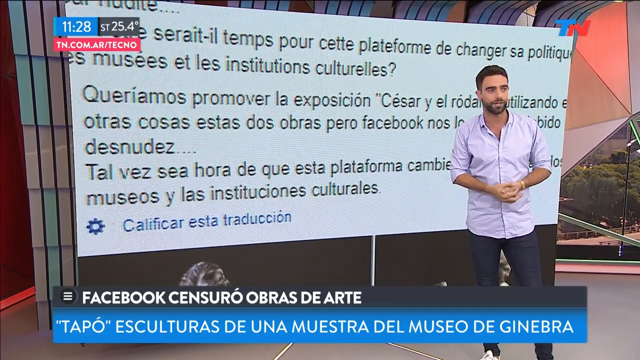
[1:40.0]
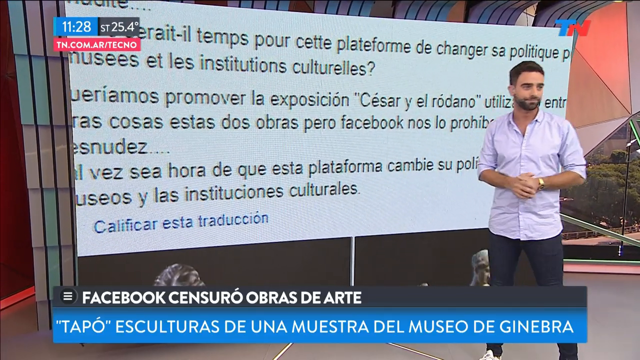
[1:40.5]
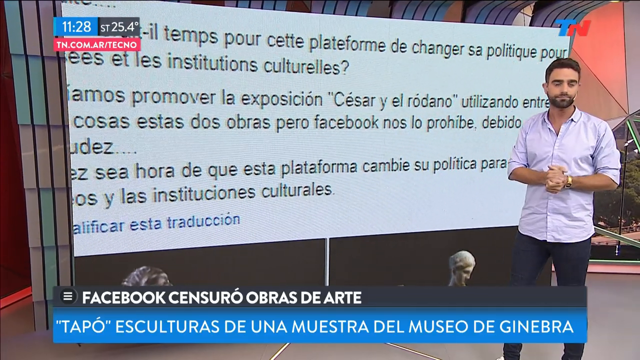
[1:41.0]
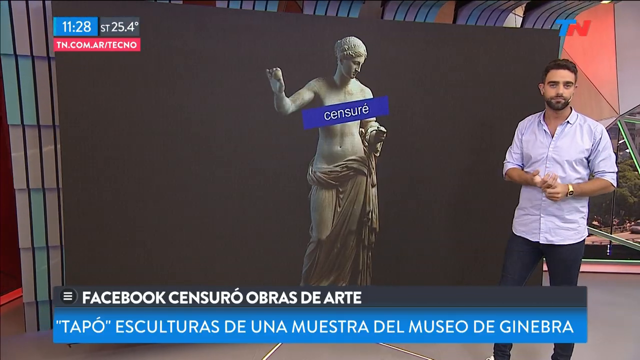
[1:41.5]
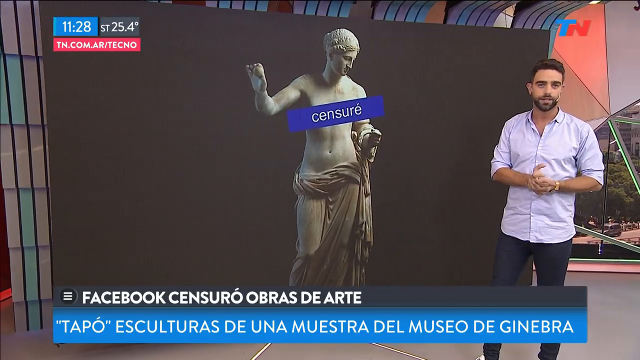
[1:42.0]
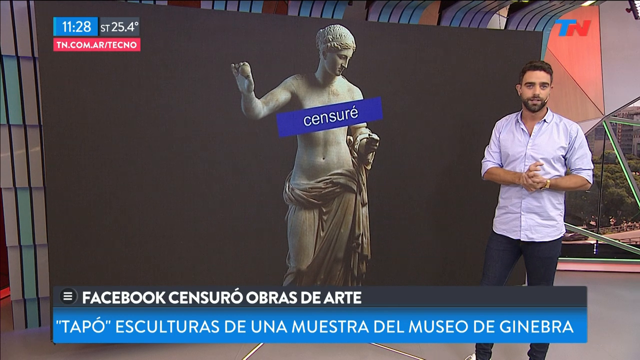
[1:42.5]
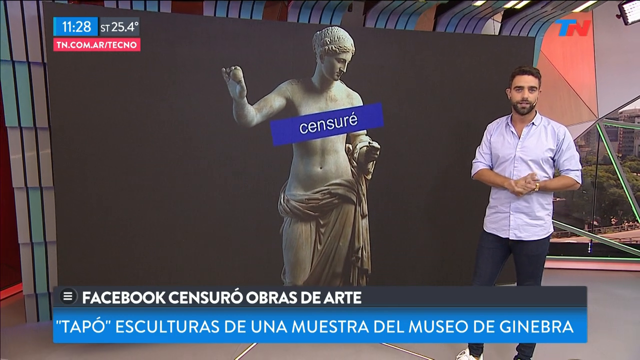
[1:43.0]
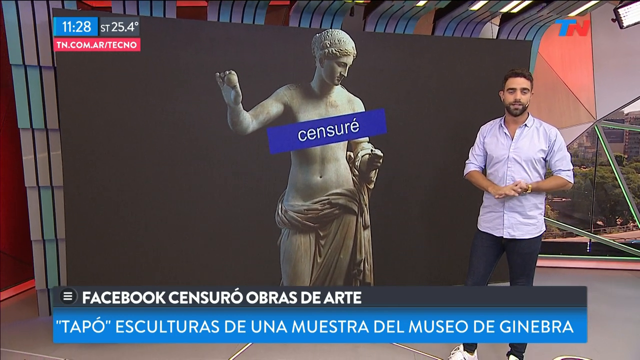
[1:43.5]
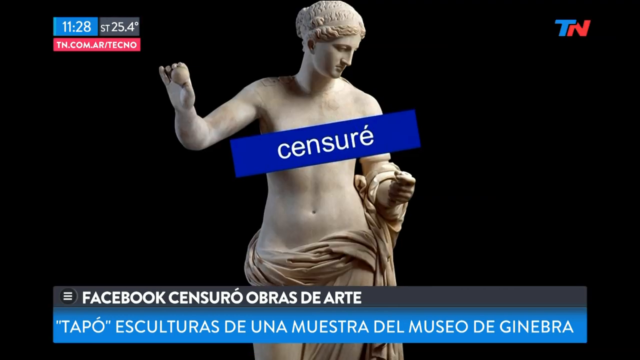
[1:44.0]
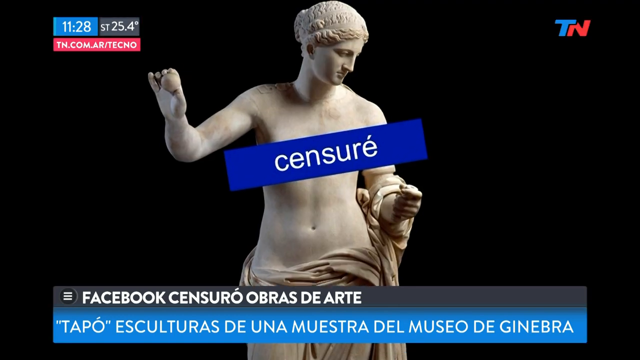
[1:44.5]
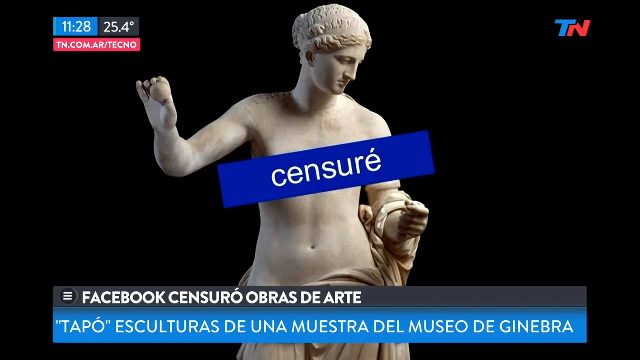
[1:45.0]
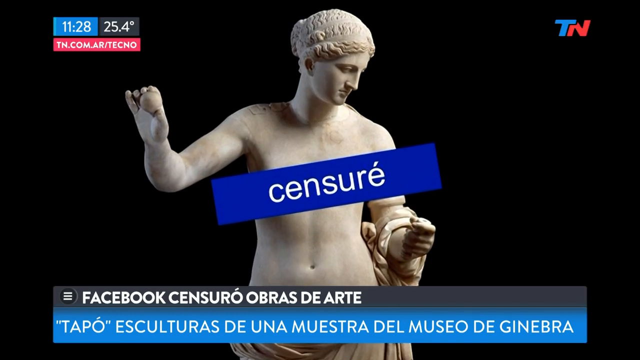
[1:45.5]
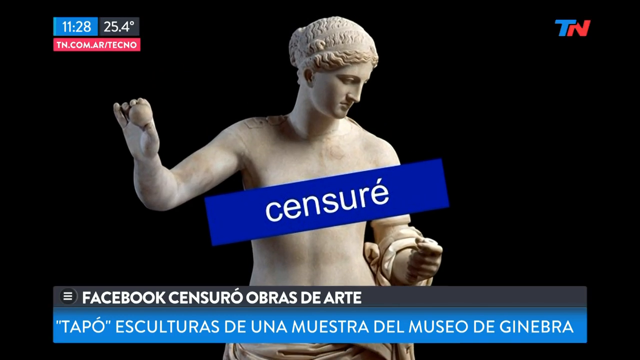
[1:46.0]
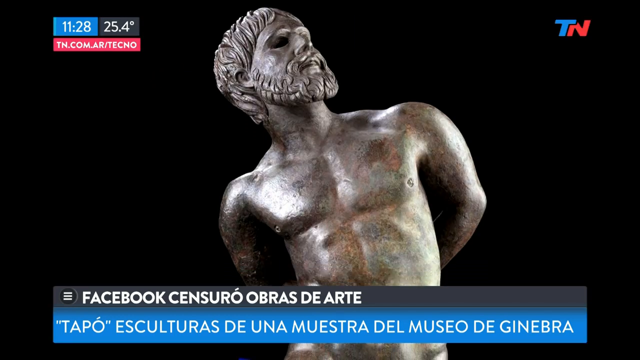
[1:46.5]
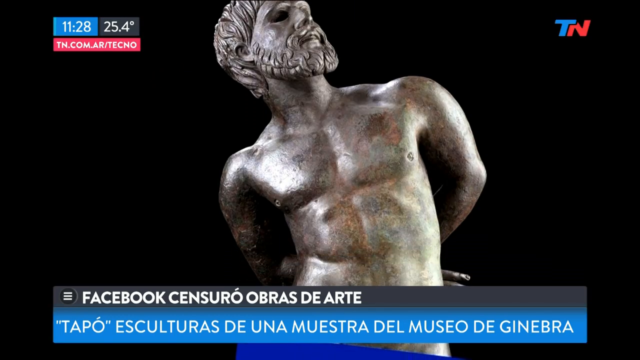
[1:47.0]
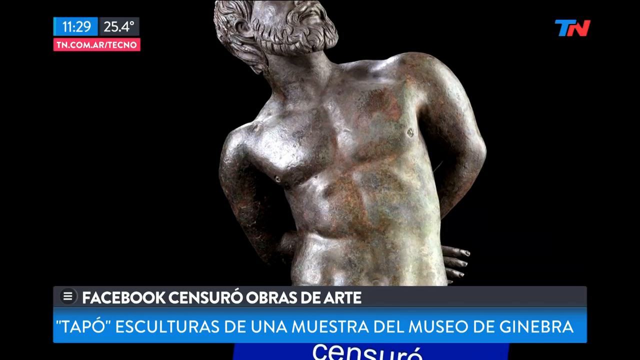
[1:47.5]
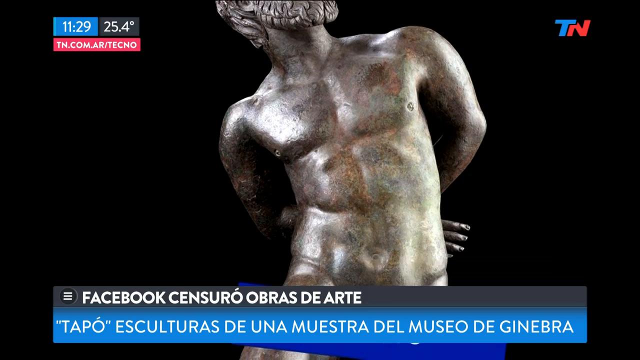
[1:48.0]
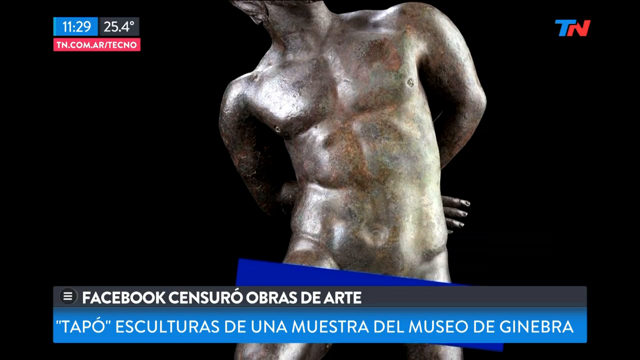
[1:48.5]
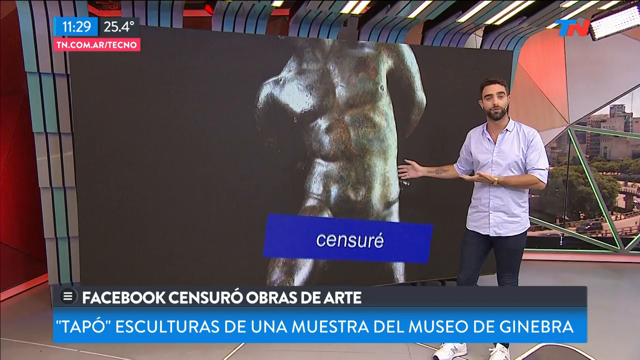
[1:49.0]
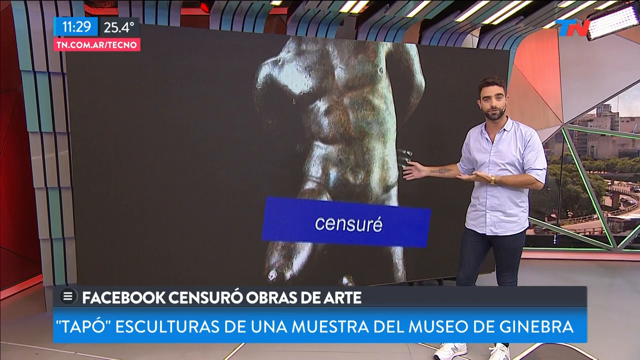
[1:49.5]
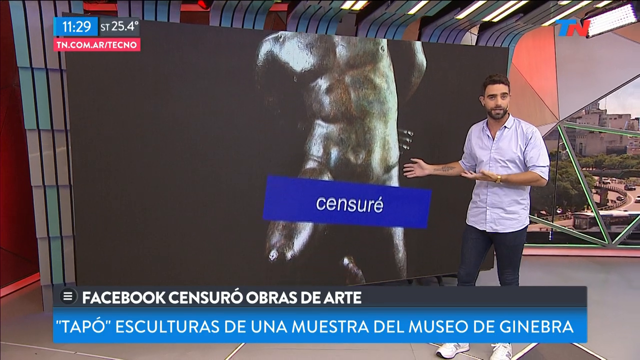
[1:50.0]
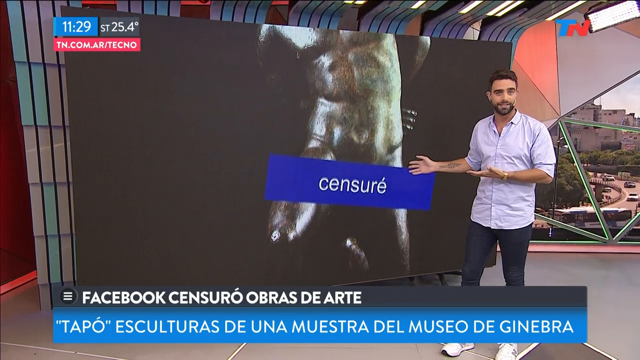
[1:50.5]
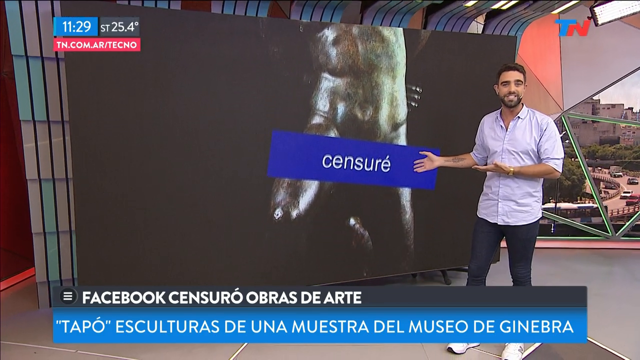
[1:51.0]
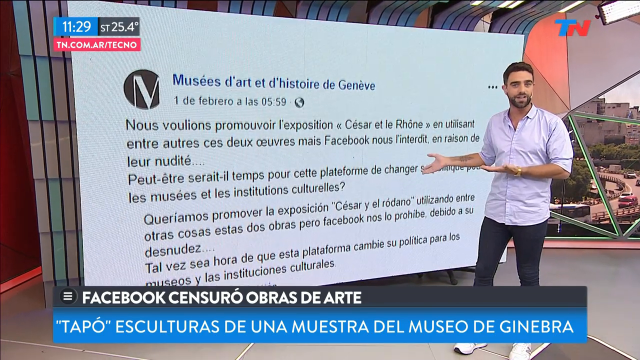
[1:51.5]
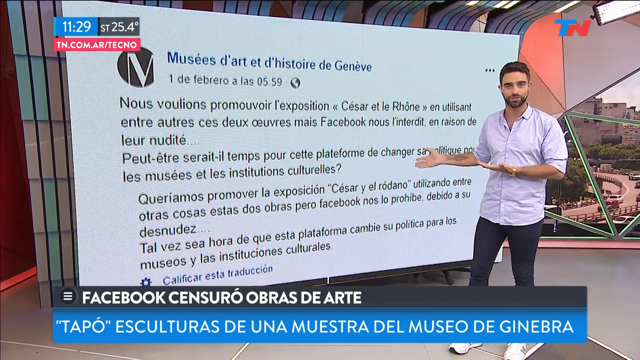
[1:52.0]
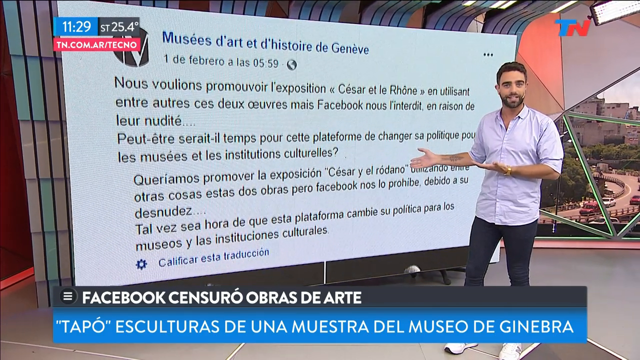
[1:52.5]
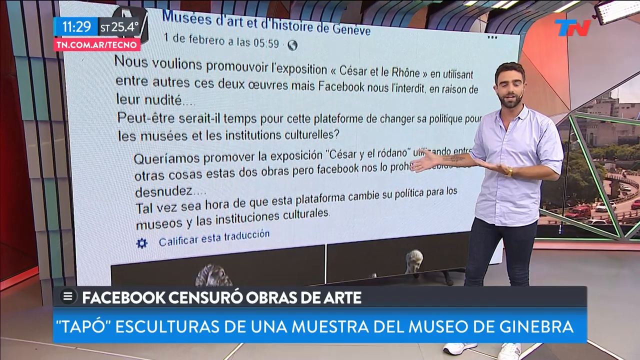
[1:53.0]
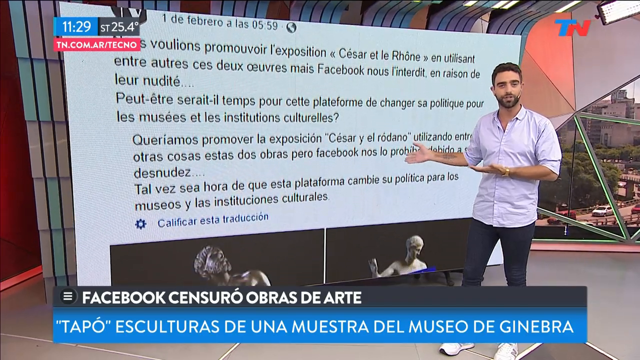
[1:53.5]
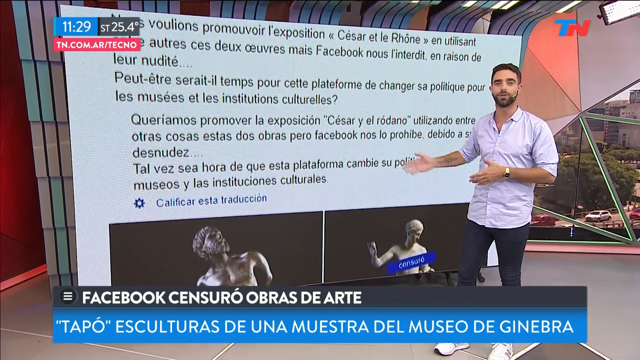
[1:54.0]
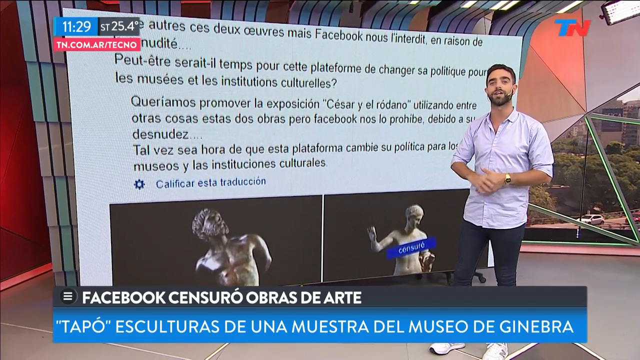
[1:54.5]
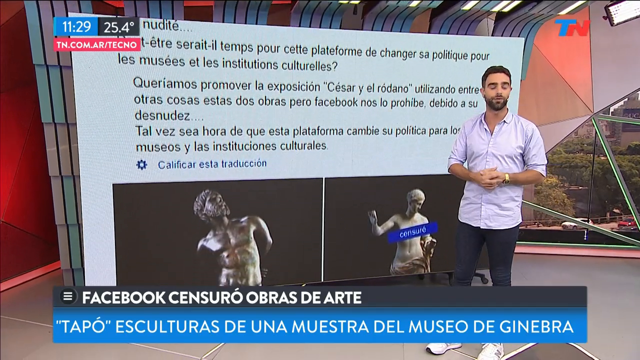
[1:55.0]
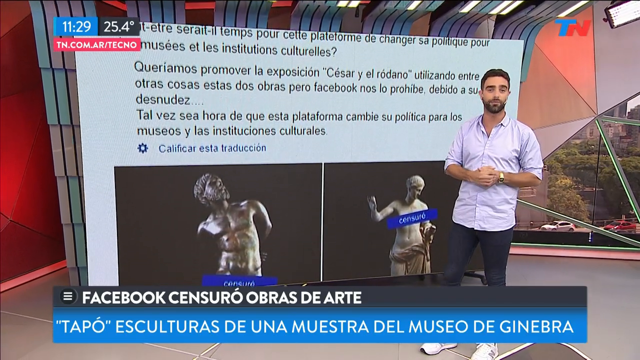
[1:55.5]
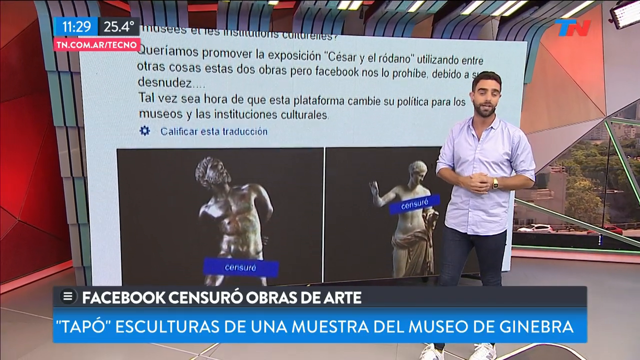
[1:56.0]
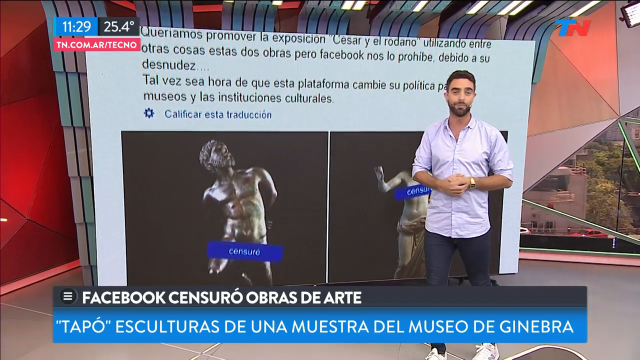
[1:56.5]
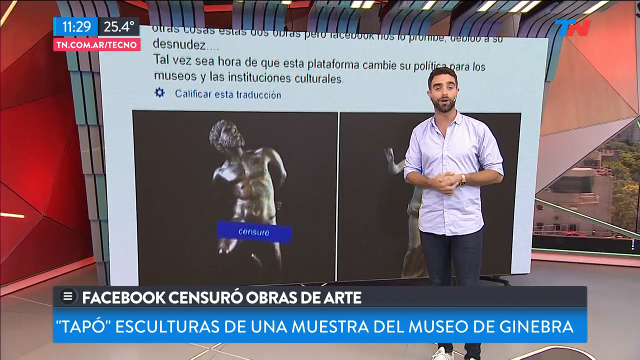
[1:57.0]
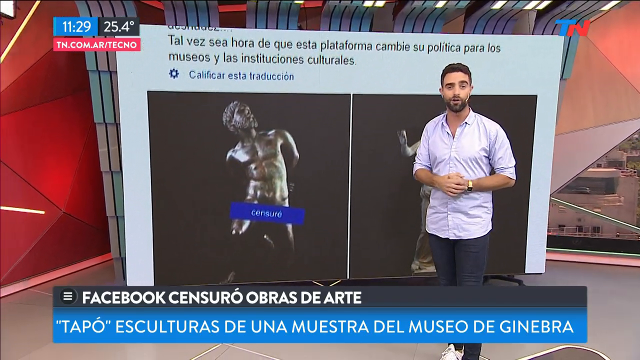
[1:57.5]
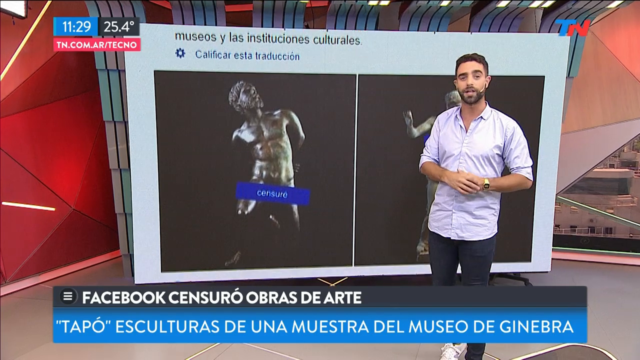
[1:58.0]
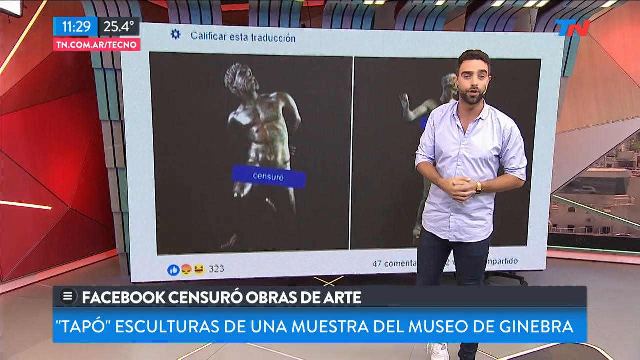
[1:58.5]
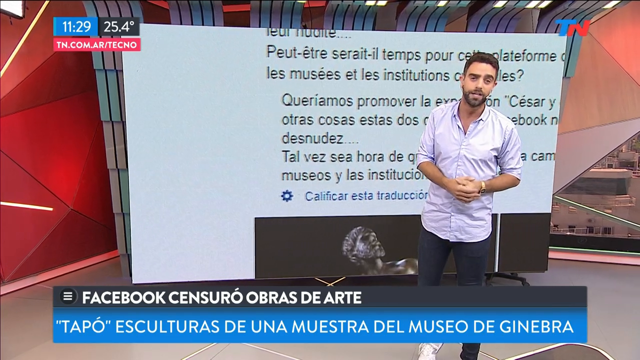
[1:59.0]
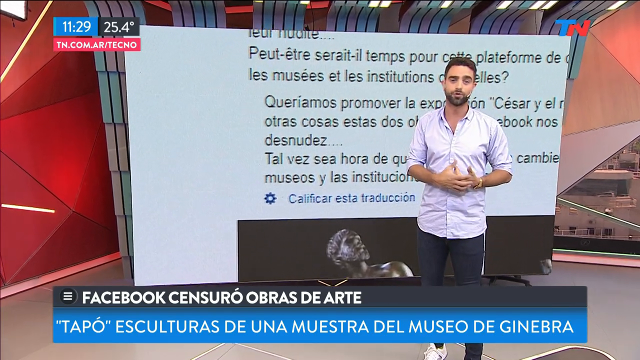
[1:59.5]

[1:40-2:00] The information on the rear surface turns out to be a projection rather than a screen, with a projector projecting it onto that surface. The setting looks like an outdoor rooftop, with moving vehicles and a number of trees in the background. The presenter describes the projected information from every angle. After the information, two statues are shown in the projection.